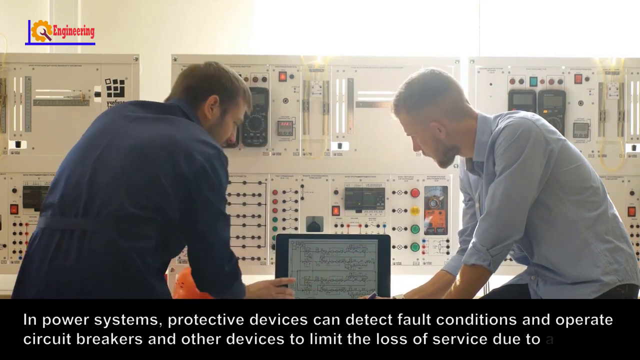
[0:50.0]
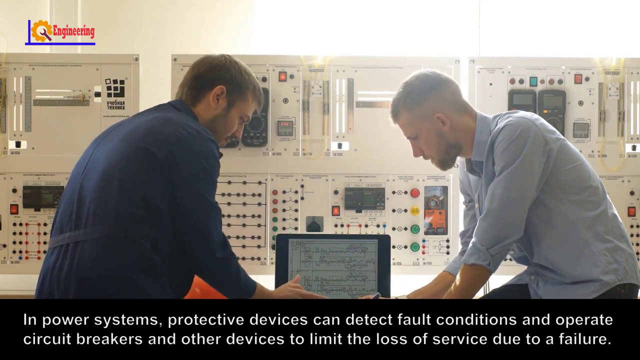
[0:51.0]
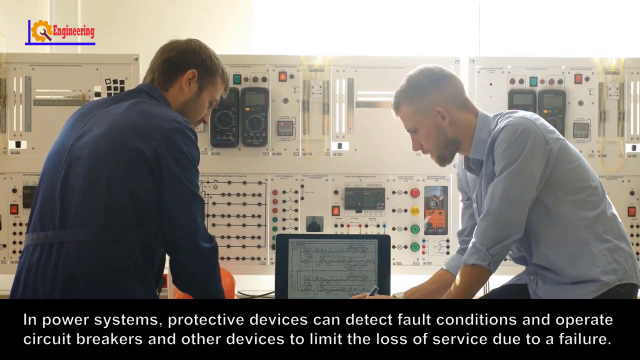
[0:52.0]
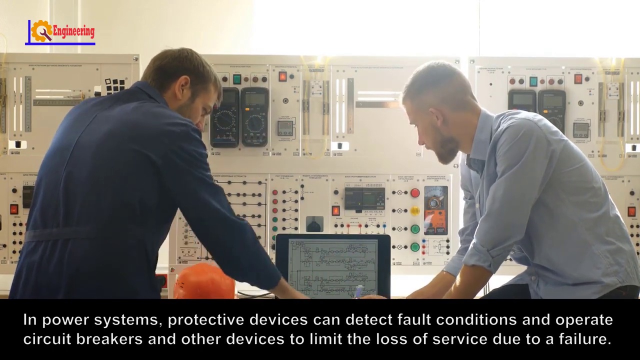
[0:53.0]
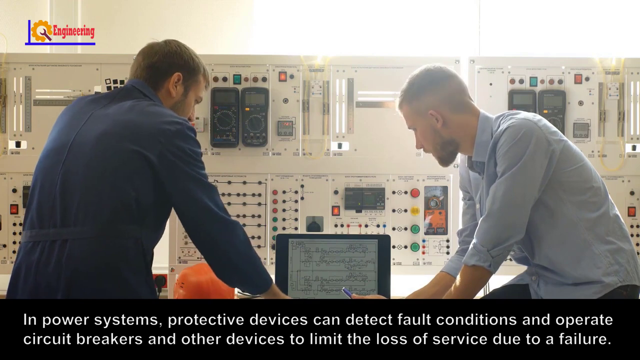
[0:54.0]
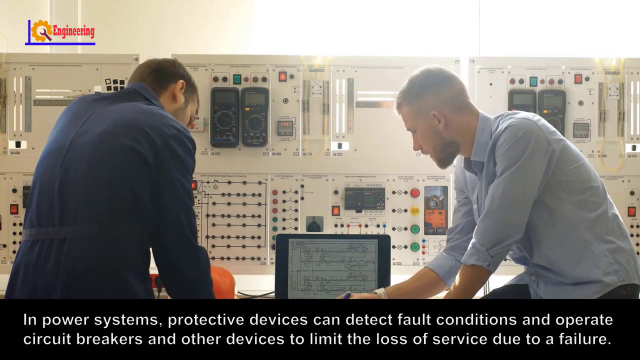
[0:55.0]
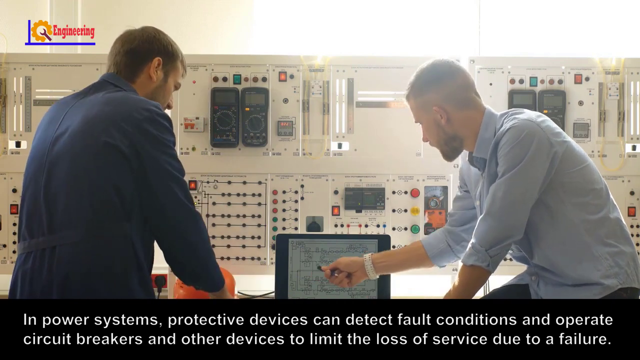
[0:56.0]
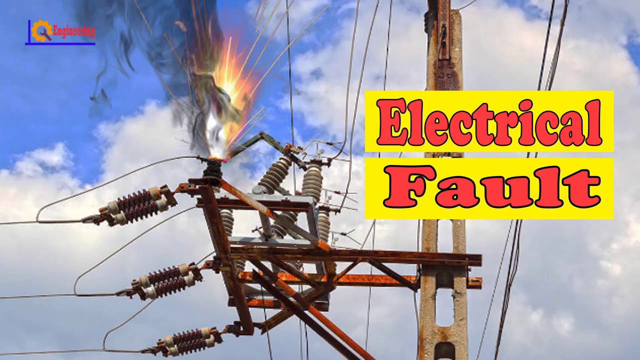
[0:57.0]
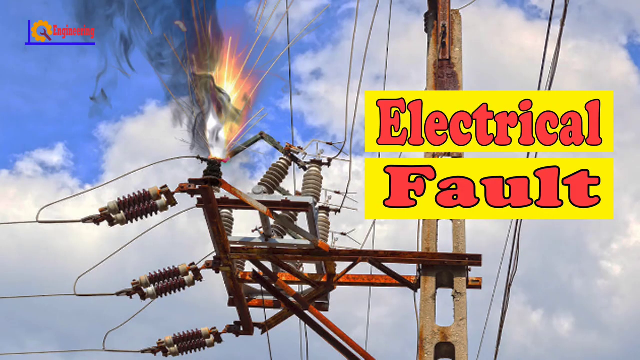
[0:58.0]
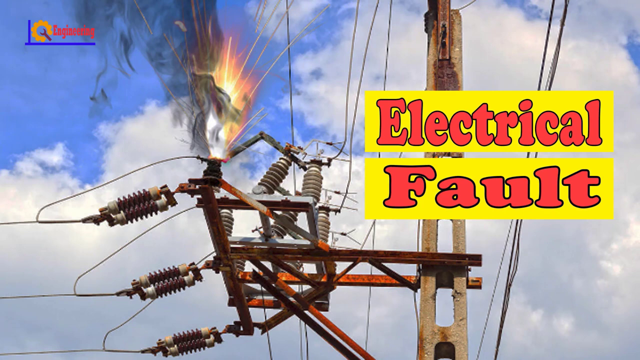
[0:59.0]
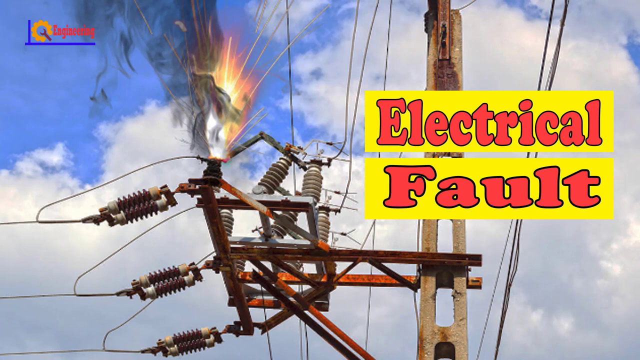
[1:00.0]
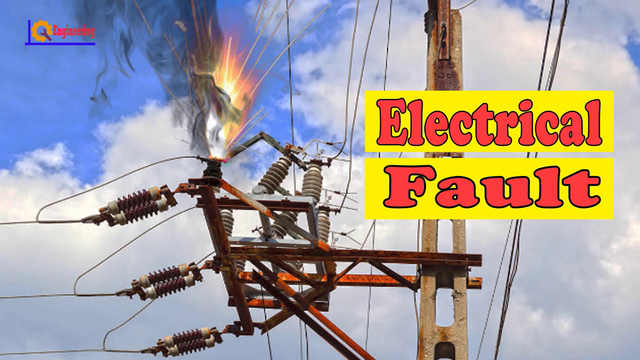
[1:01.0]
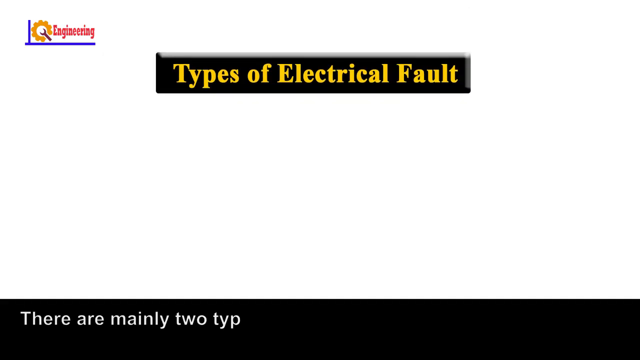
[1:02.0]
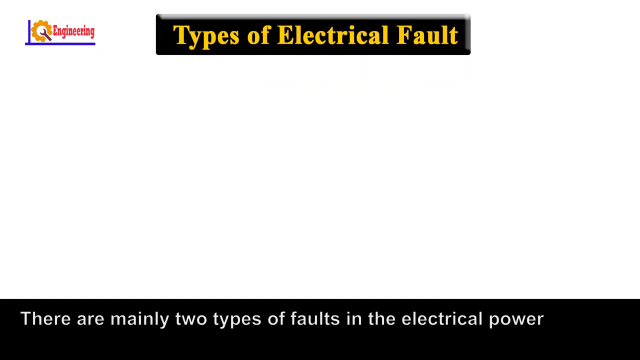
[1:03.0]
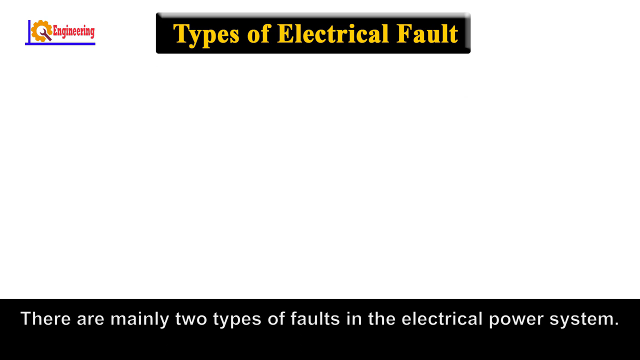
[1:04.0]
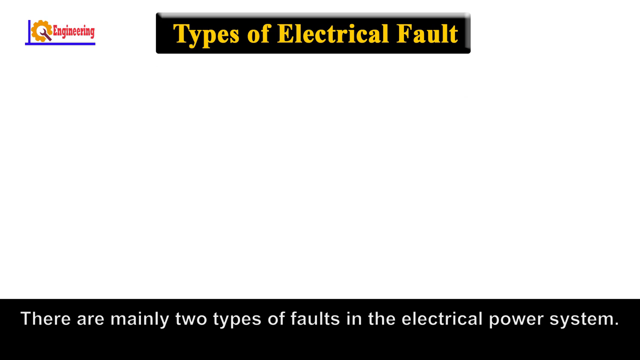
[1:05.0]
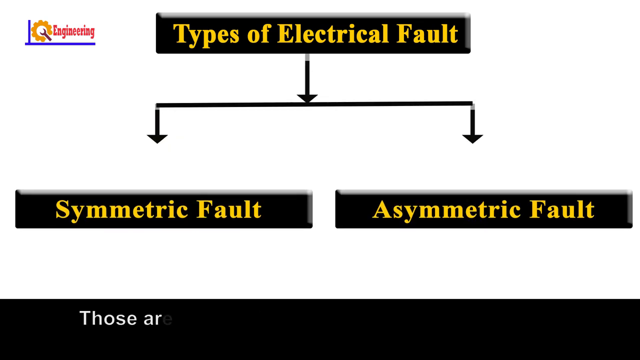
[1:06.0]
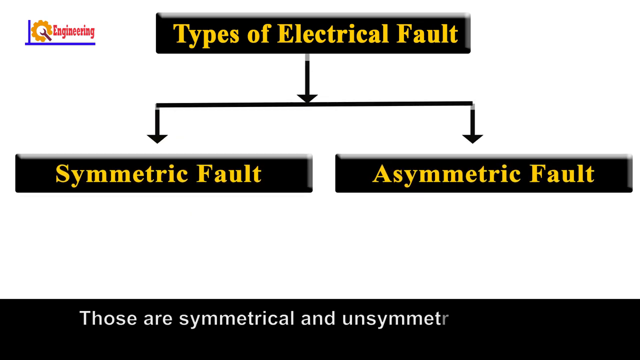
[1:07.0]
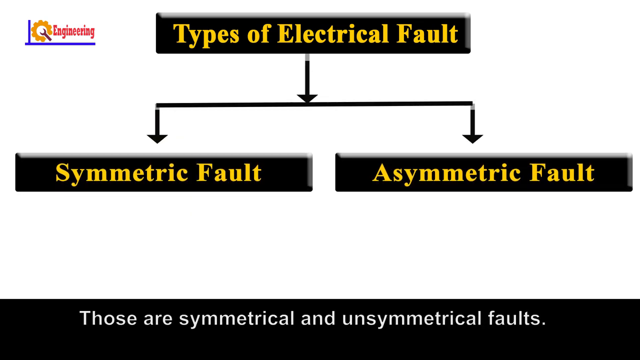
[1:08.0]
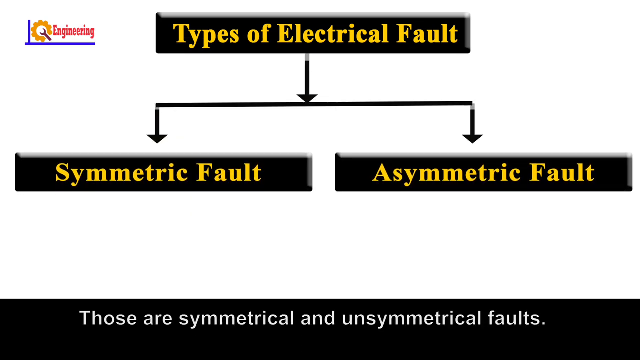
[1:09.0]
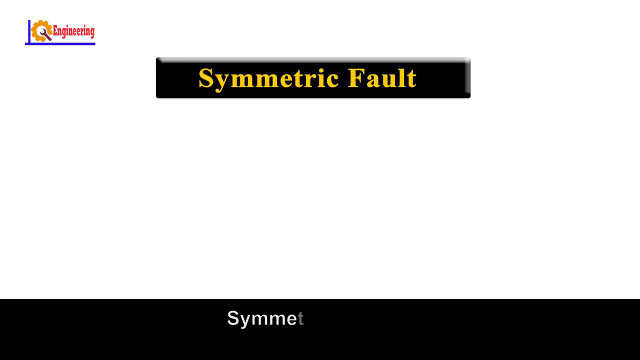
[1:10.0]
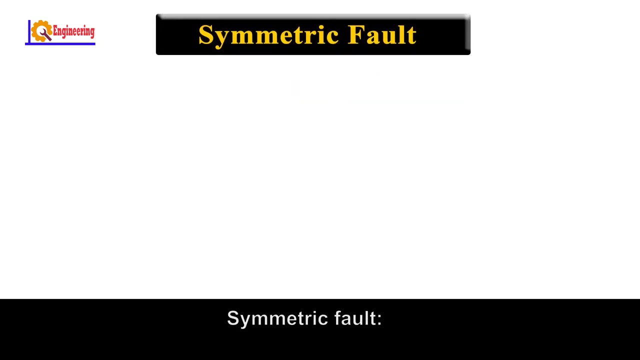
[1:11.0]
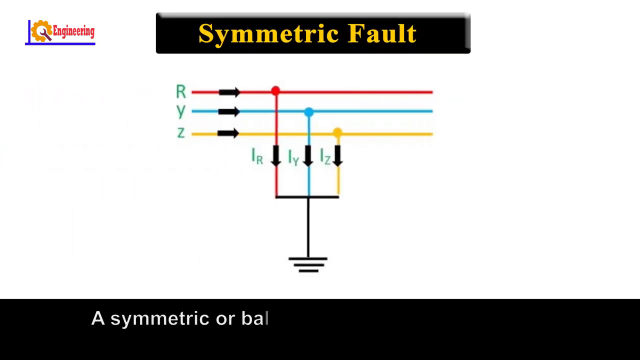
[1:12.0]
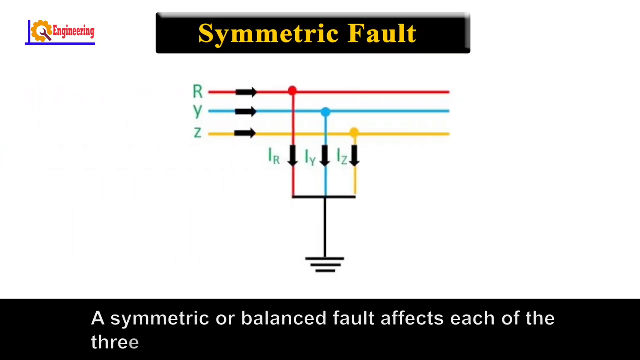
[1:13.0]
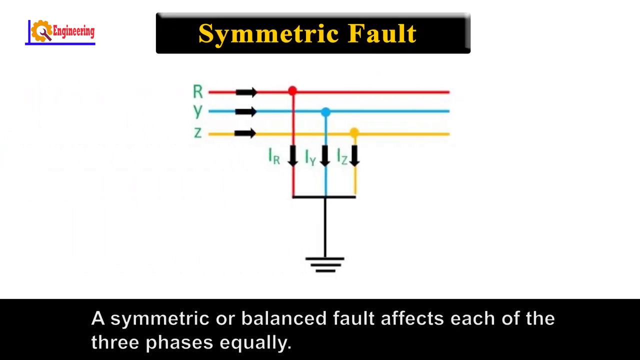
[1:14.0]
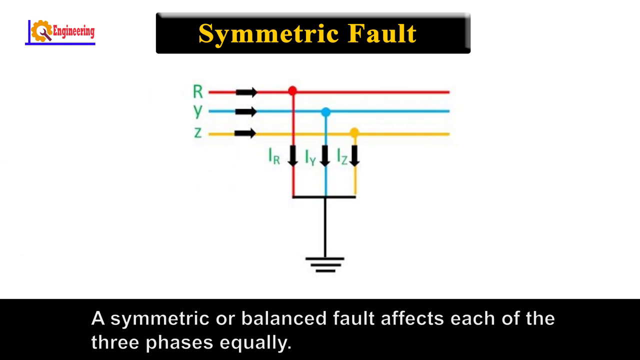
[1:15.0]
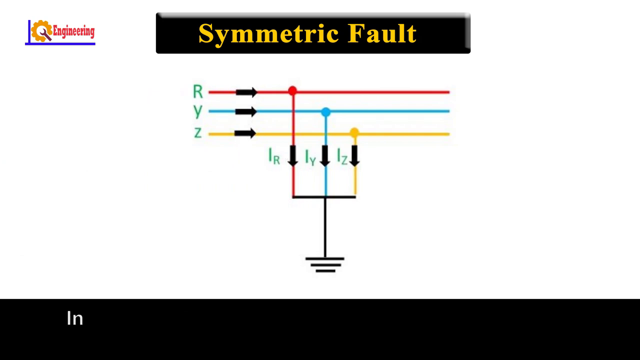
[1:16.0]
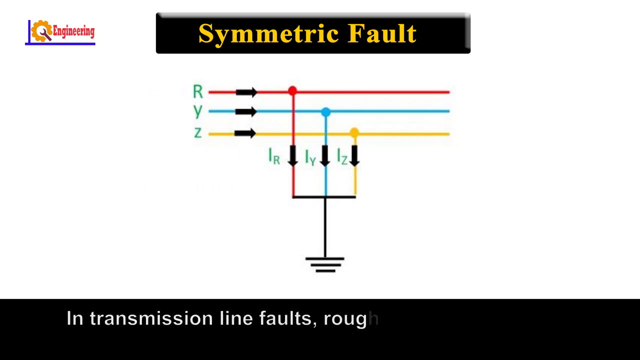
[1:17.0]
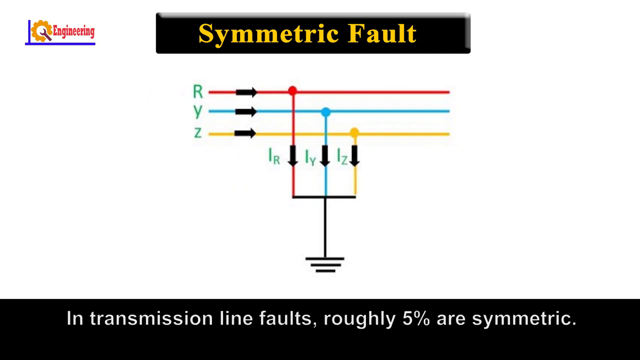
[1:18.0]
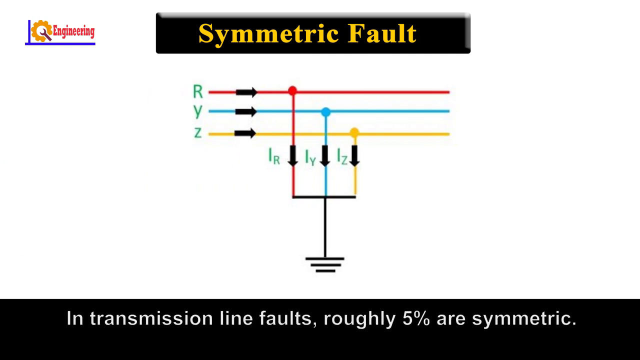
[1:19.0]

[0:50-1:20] The plant manager appears, and a still frame shows an electrical fault. What looks like a graph of the types of electrical faults begins, one showing a symmetric fault and the other an asymmetric fault. The symmetric fault graph has red, light blue and yellow lines, with indicators explaining what each line represents. The engineer and the plant manager appear to be hard at work. The graph looks like a standard textbook-style graph. Its abbreviations are R, Y and Z: R with the red line, Y with the blue line and Z with the yellow line. Other indicators, IR, IY and IZ, share the corresponding colors.